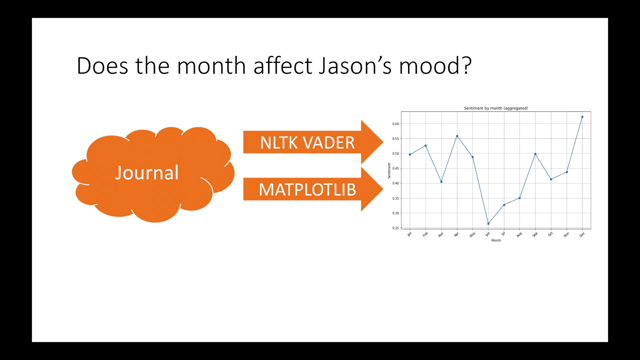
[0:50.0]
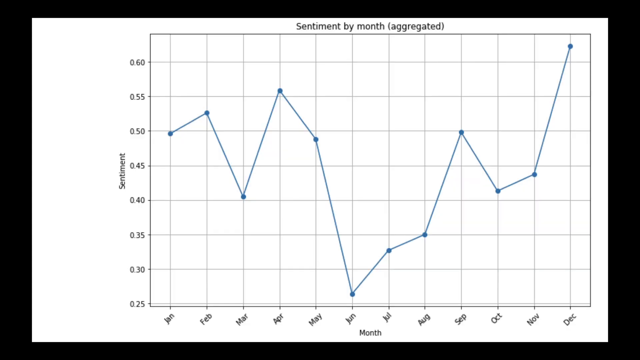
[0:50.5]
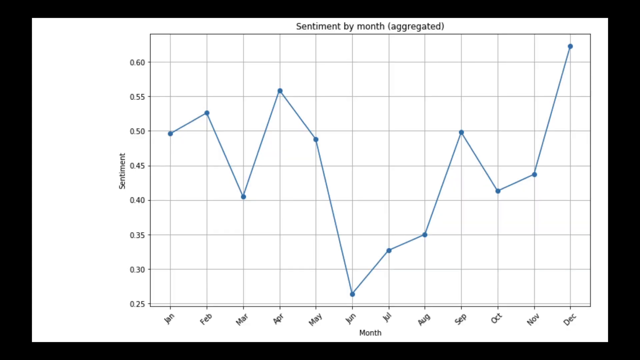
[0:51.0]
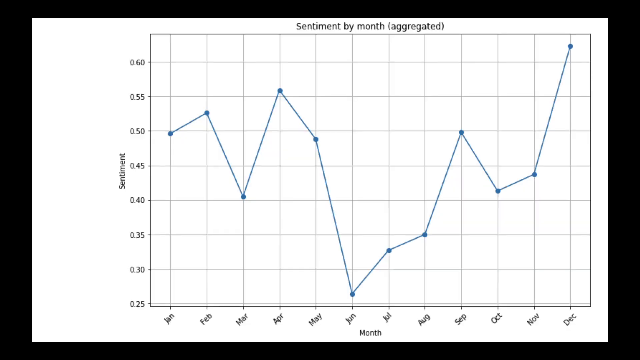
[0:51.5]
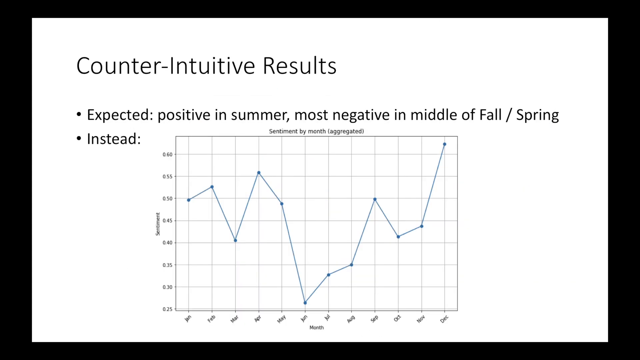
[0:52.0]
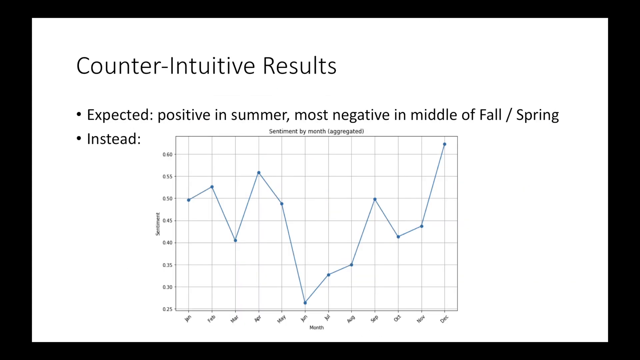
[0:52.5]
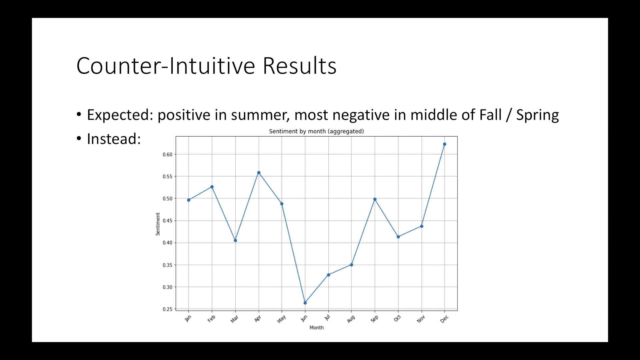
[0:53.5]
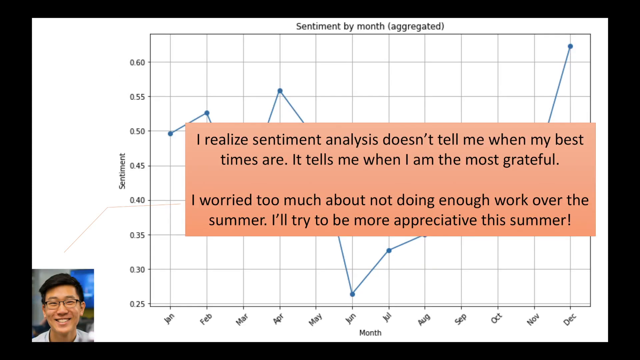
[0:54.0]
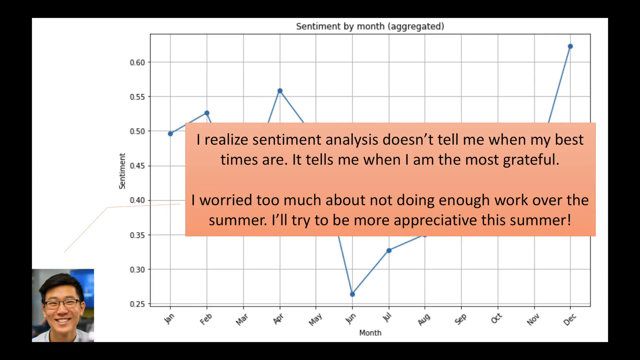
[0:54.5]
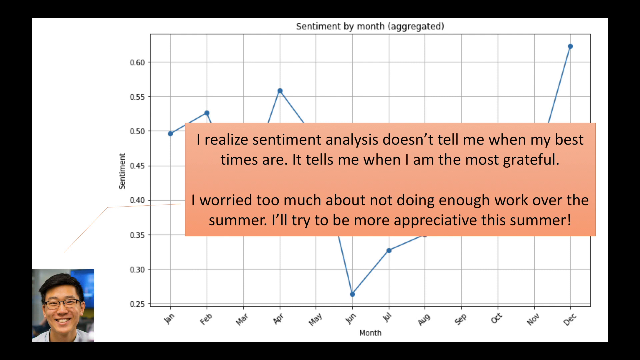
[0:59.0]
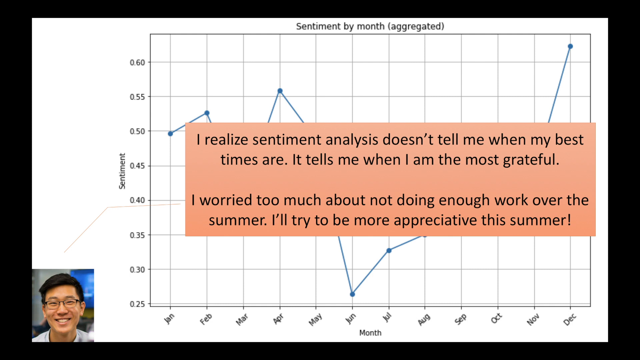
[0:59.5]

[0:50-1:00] A graph shows sentiment by month, with sentiment on the y-axis. The line starts at 0.5 sentiment and goes up and down over the months, reaching up to 0.6. The next picture shows another graph with text at the top. Text on the screen includes "I'll try to be more appreciative of myself."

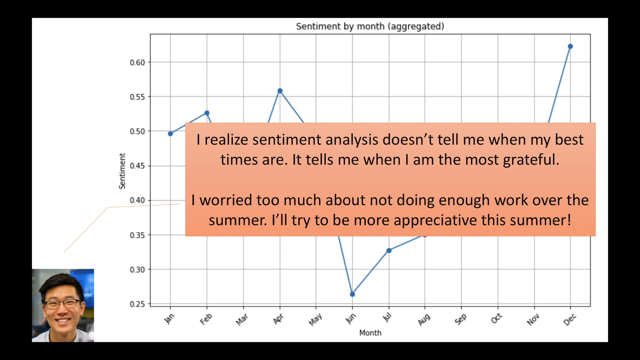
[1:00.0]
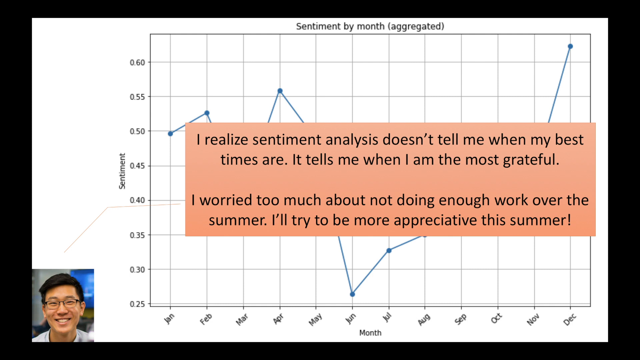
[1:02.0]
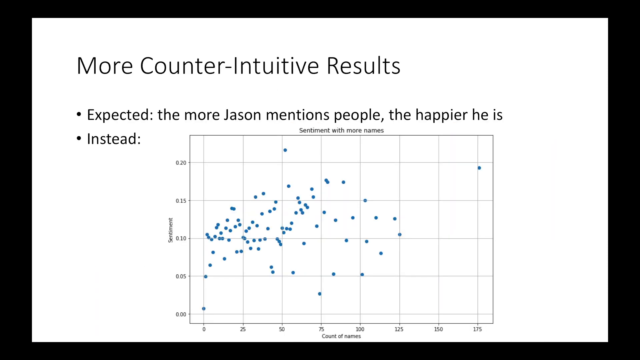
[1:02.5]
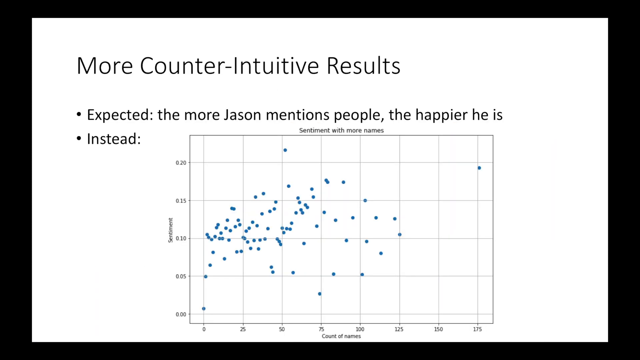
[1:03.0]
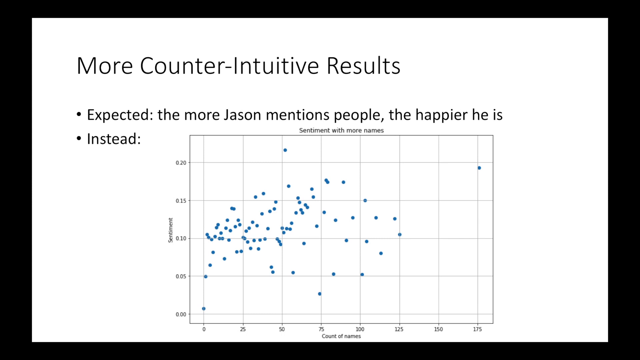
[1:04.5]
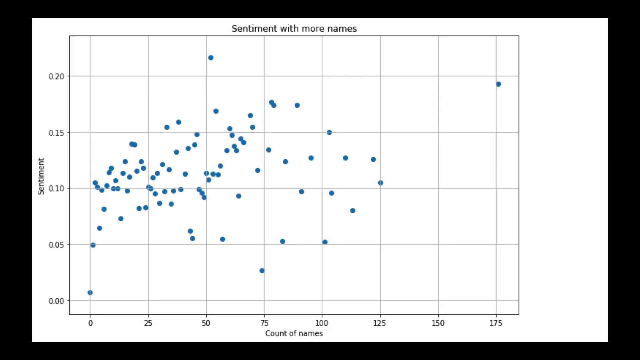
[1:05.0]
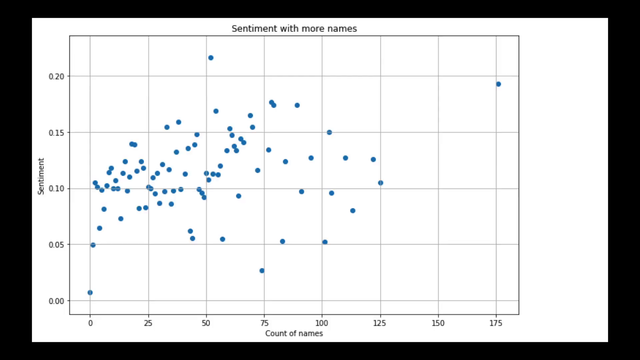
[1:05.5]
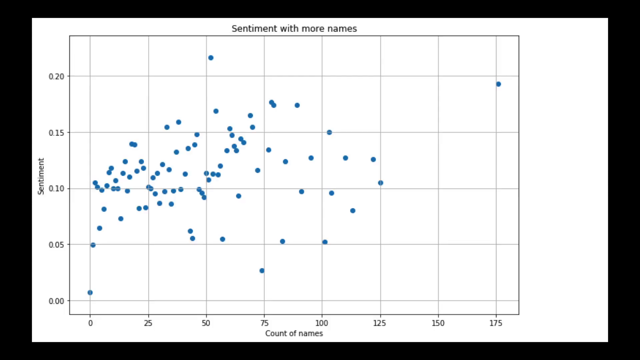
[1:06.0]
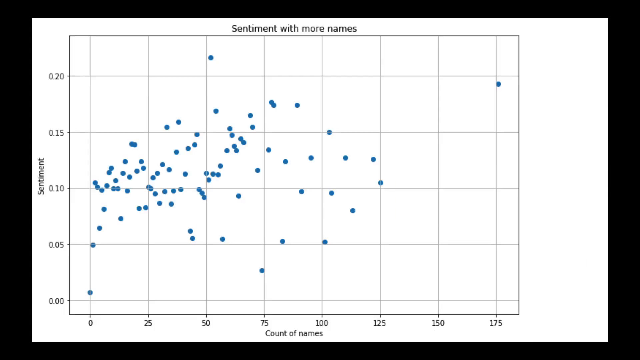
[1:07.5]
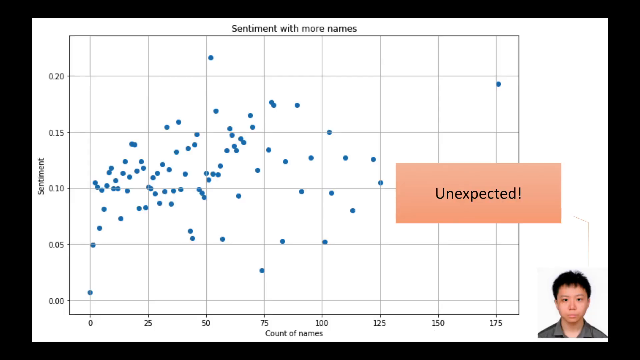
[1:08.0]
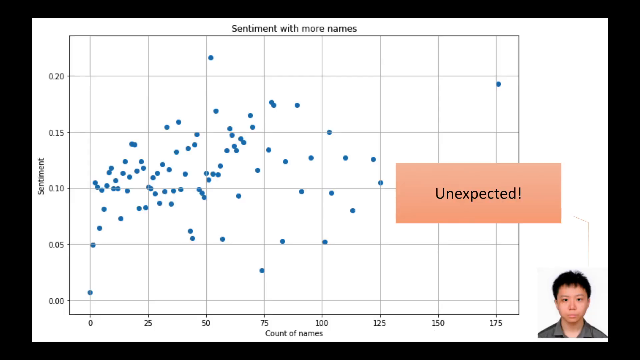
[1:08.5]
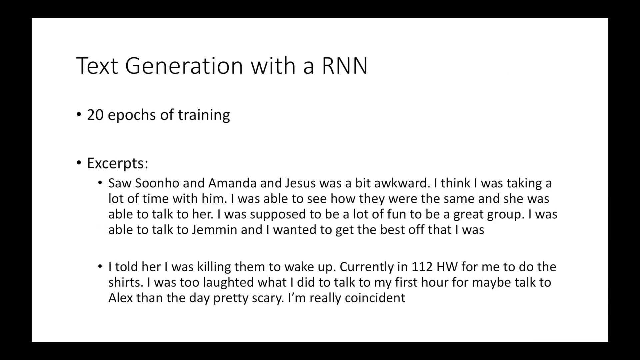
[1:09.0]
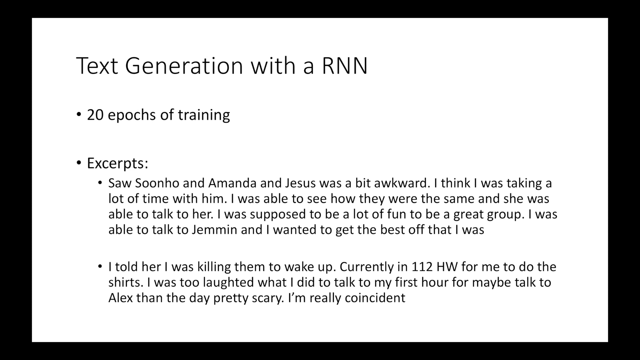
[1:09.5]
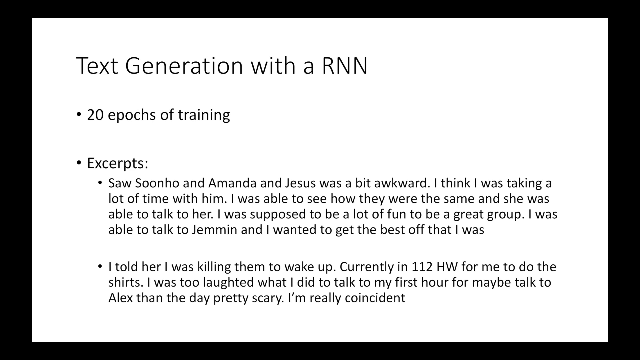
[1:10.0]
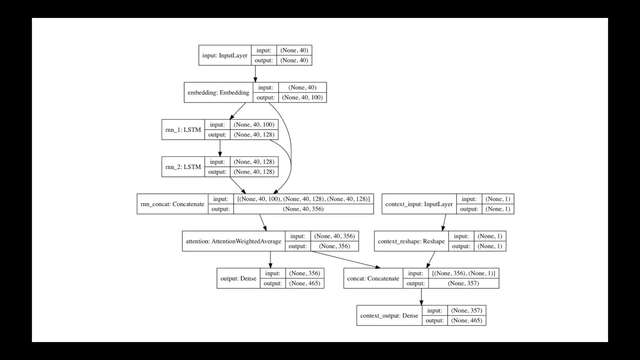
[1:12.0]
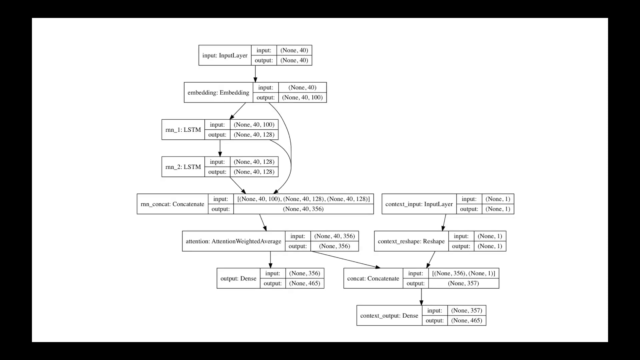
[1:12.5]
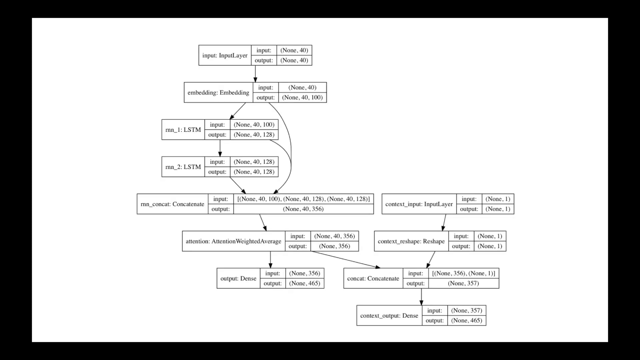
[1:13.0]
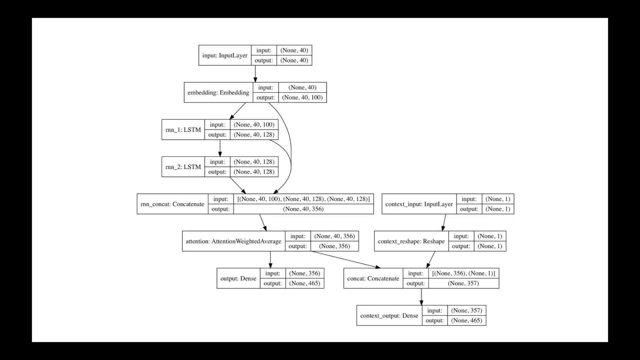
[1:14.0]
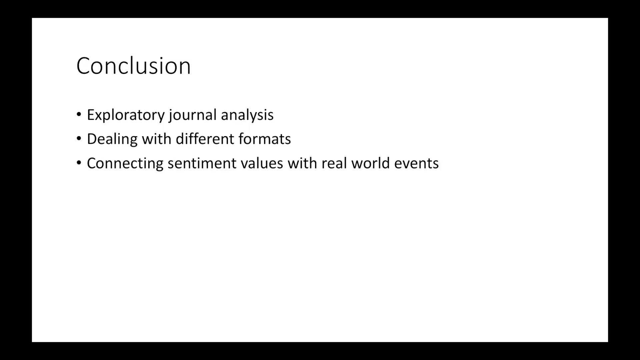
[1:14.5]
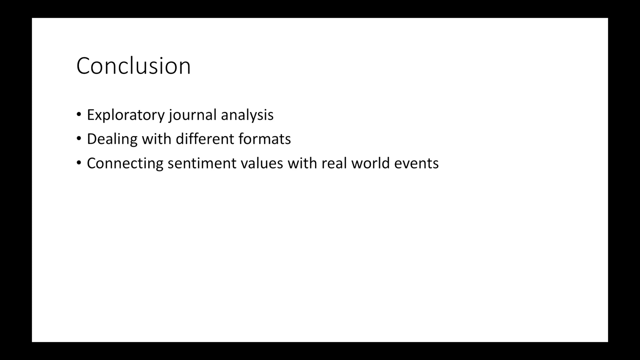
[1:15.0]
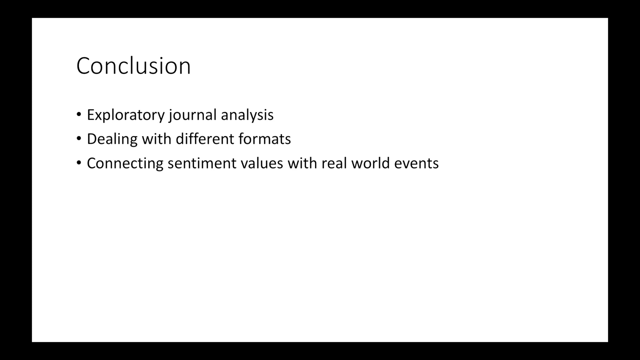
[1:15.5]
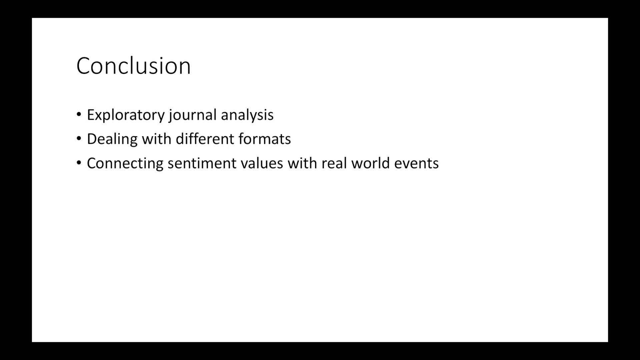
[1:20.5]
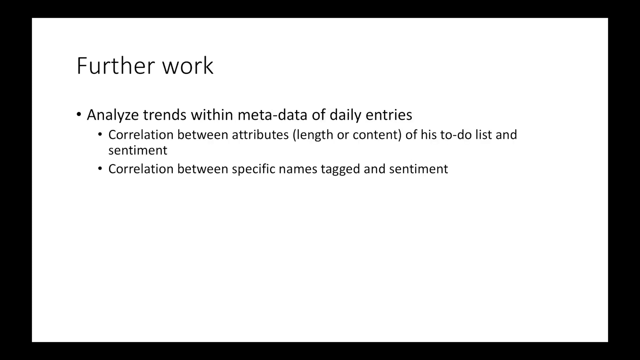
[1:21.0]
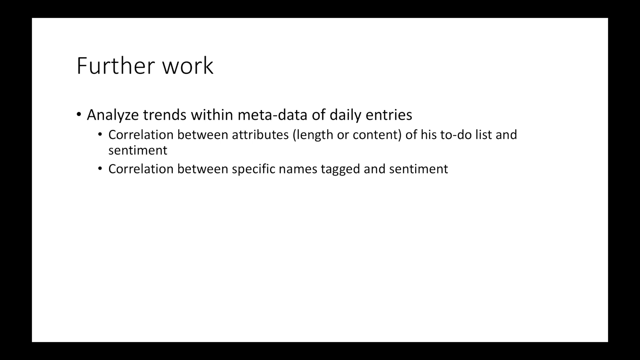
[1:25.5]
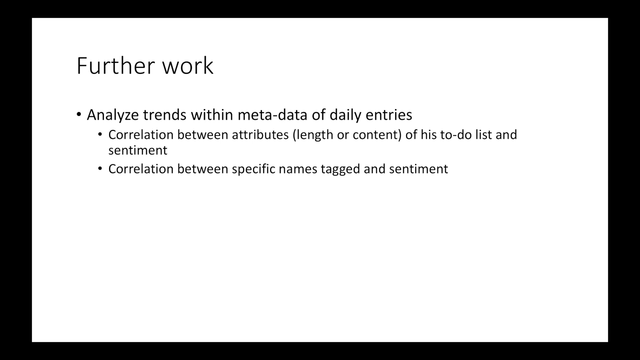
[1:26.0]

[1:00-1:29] A graph shows sentiment measured from 0.5 to 0.6. A photograph of a person is in the bottom right corner, with text that includes "I try to be more appreciative of myself." The next screen shows more content, and then a graph made of dots, with sentiment on the x and y axes. There is a comment from the person at the bottom right of the screen. A photograph appears after that.